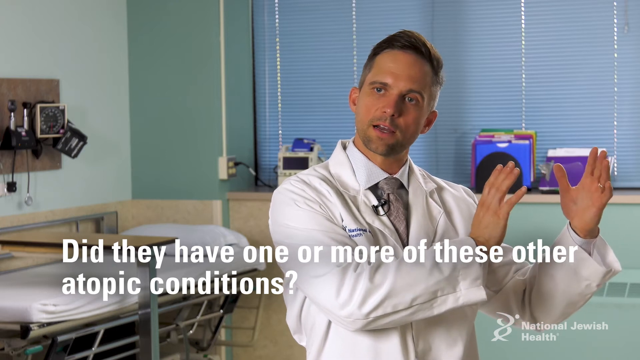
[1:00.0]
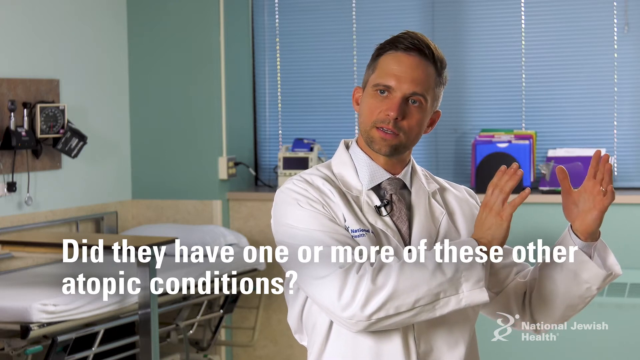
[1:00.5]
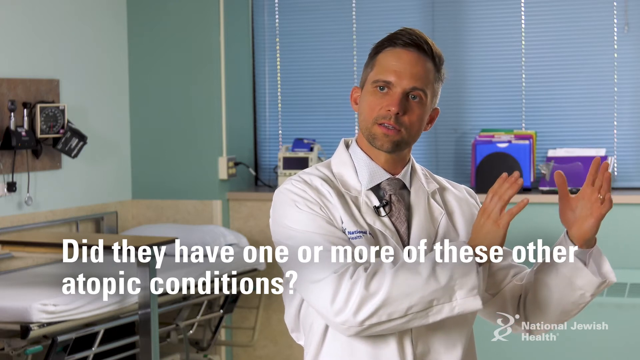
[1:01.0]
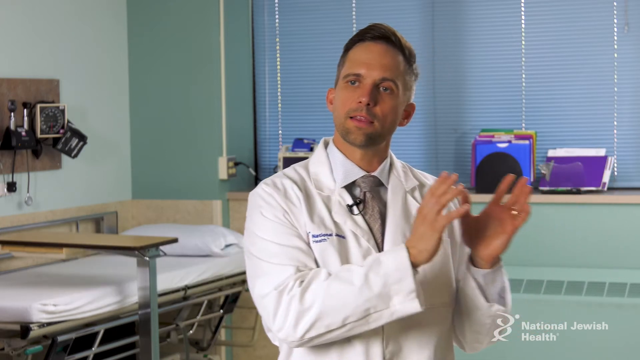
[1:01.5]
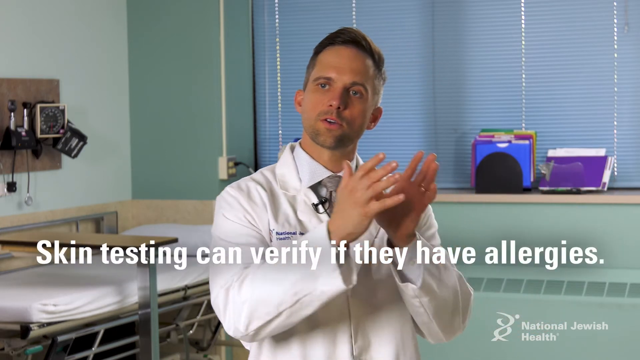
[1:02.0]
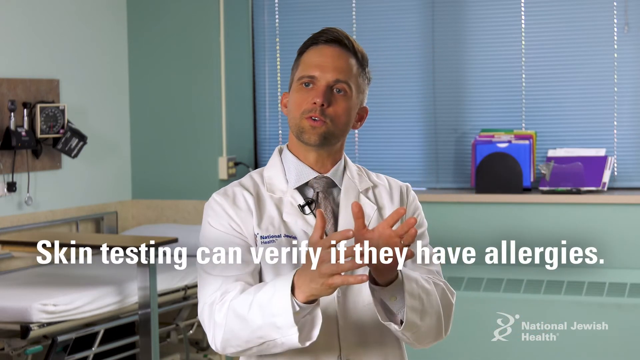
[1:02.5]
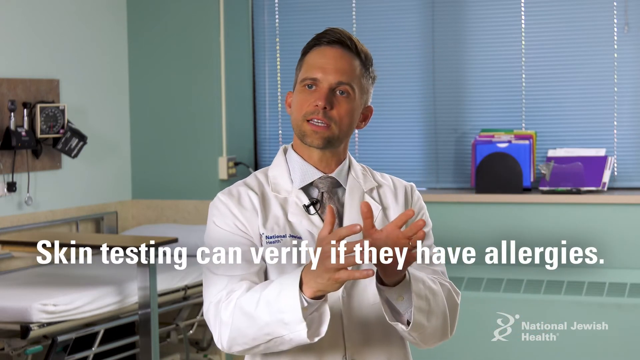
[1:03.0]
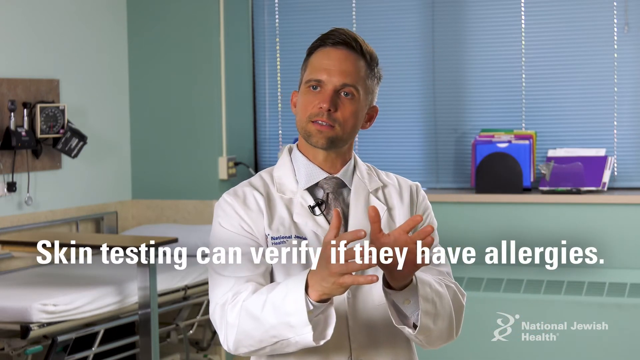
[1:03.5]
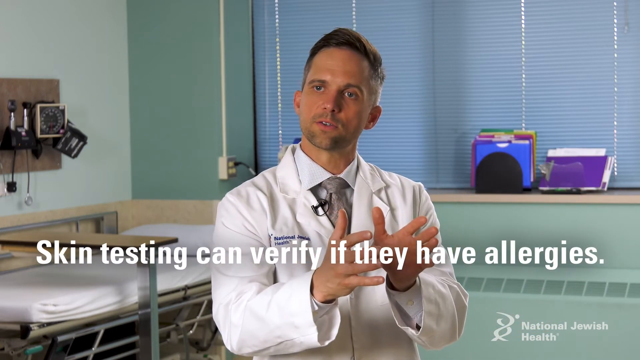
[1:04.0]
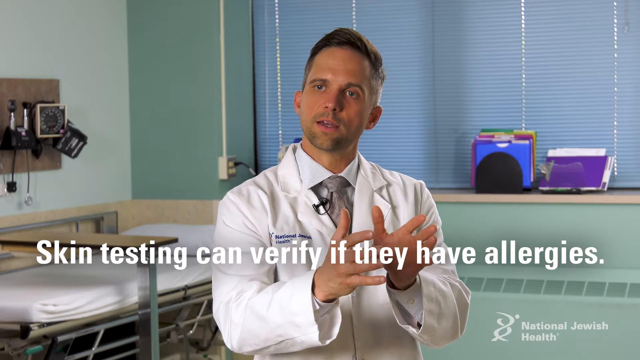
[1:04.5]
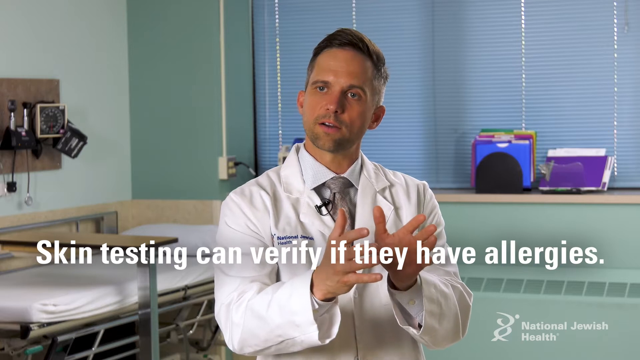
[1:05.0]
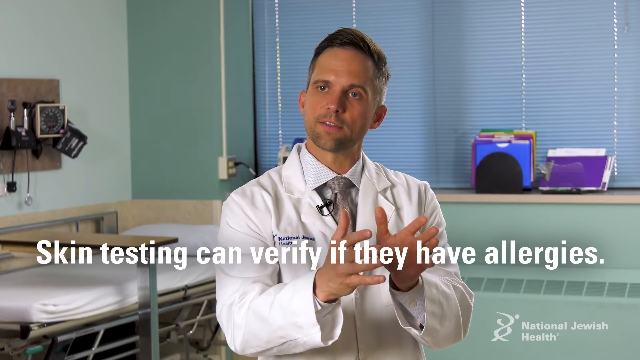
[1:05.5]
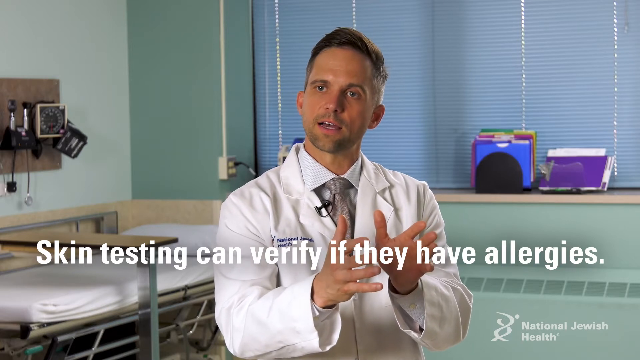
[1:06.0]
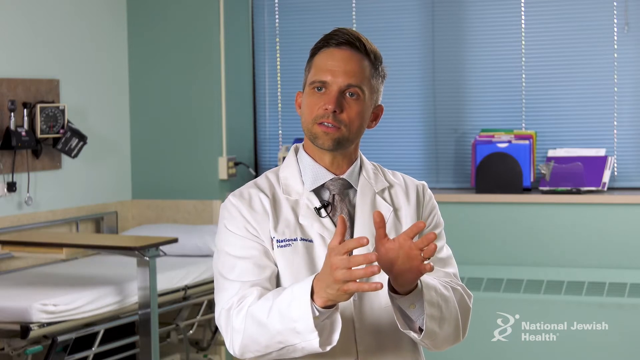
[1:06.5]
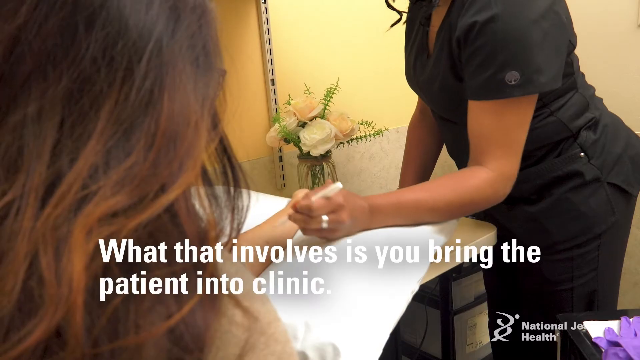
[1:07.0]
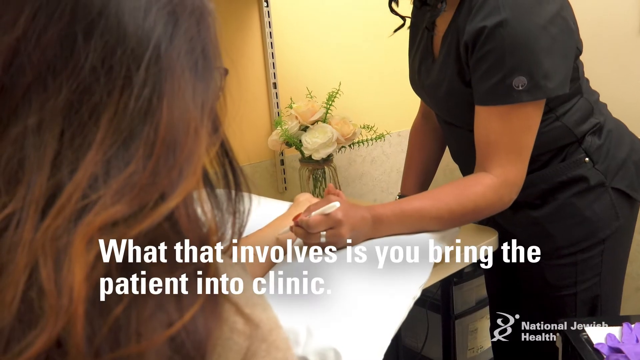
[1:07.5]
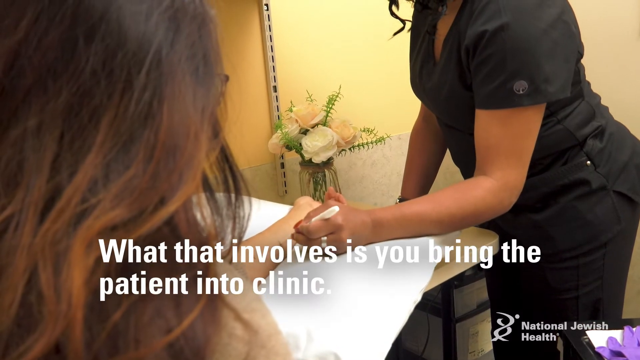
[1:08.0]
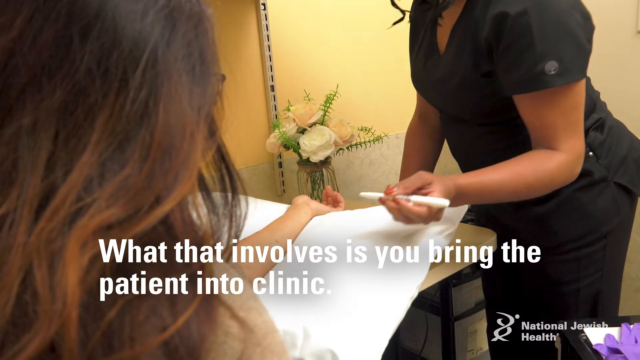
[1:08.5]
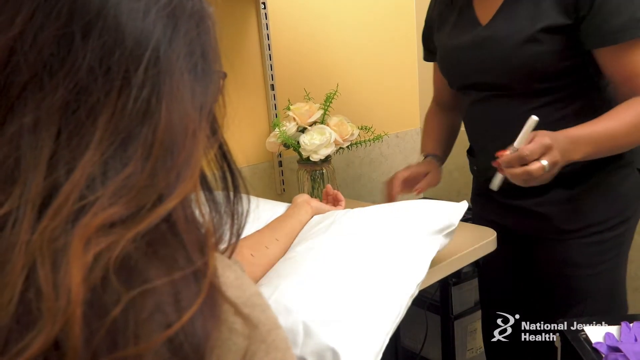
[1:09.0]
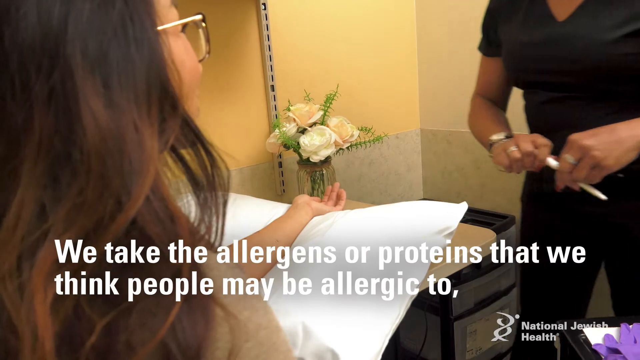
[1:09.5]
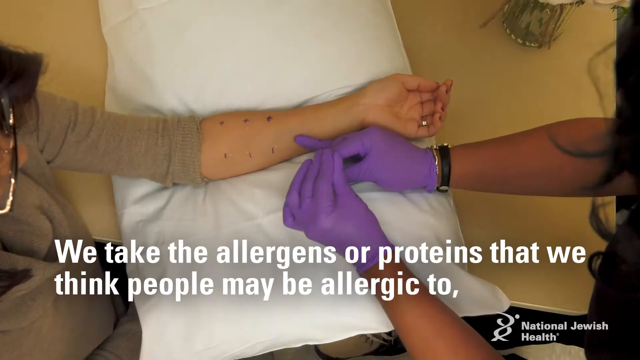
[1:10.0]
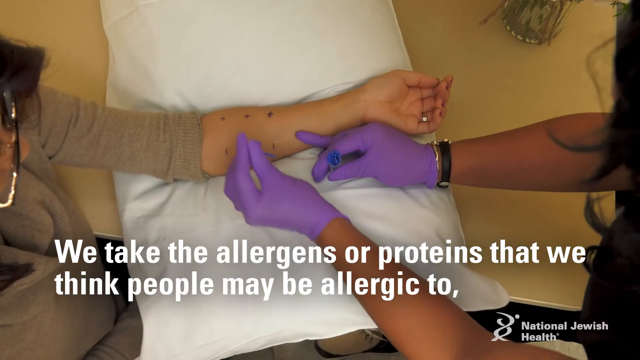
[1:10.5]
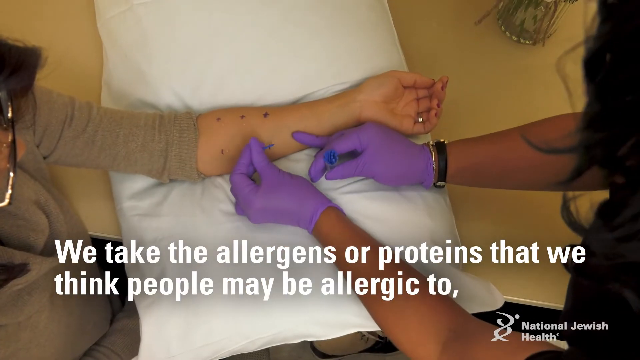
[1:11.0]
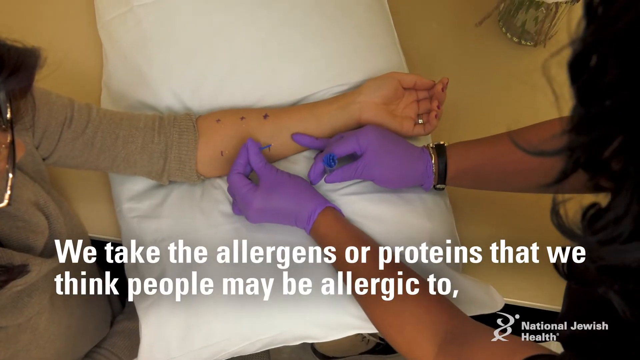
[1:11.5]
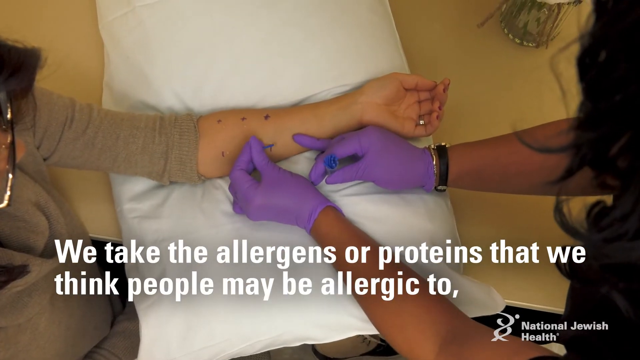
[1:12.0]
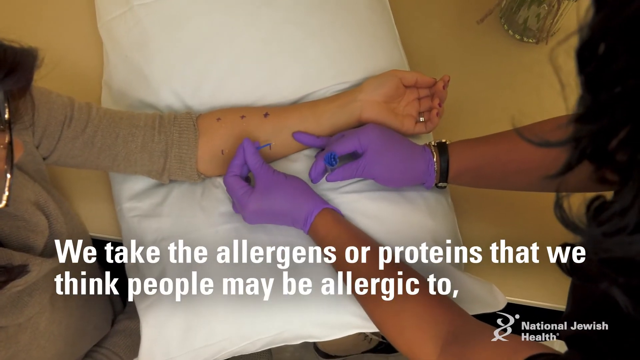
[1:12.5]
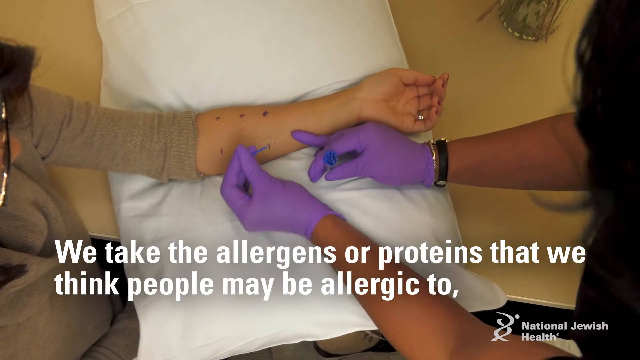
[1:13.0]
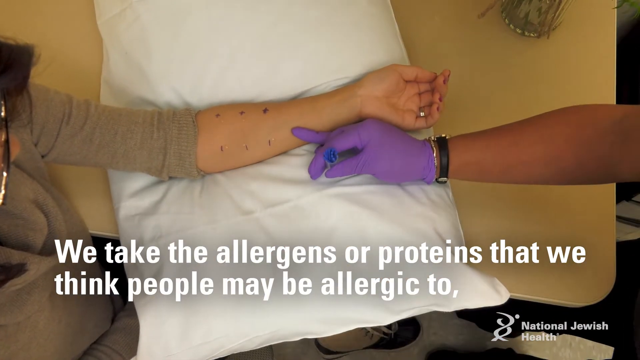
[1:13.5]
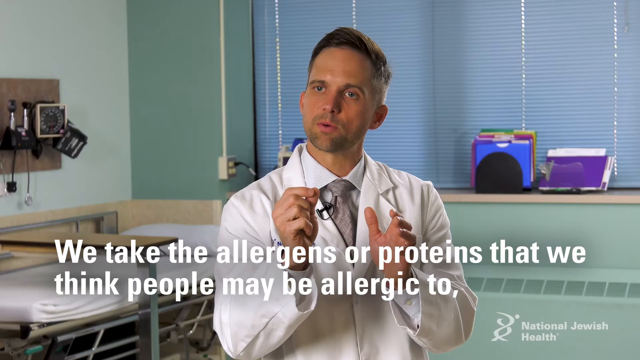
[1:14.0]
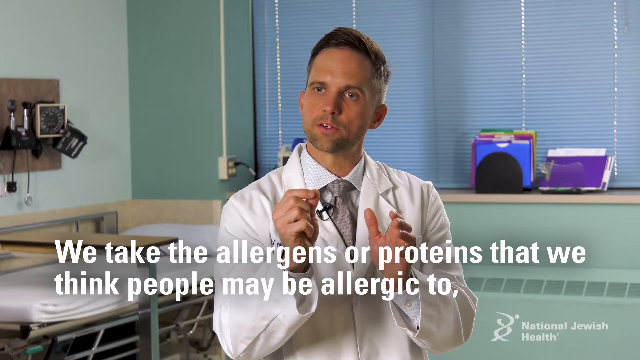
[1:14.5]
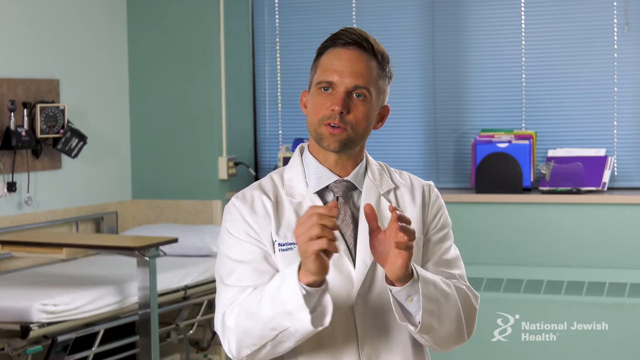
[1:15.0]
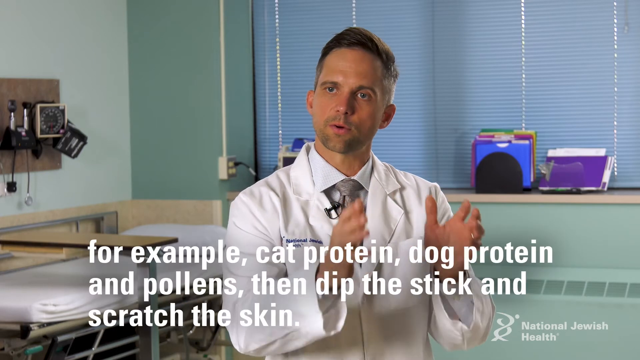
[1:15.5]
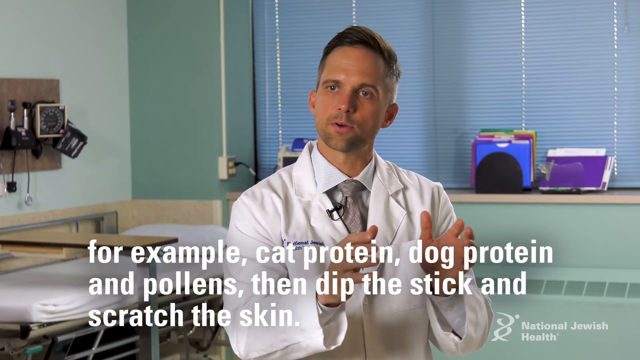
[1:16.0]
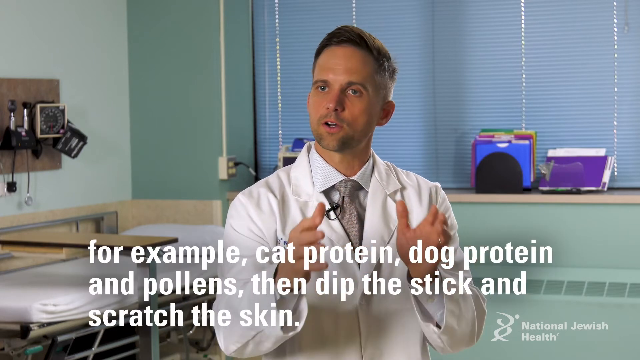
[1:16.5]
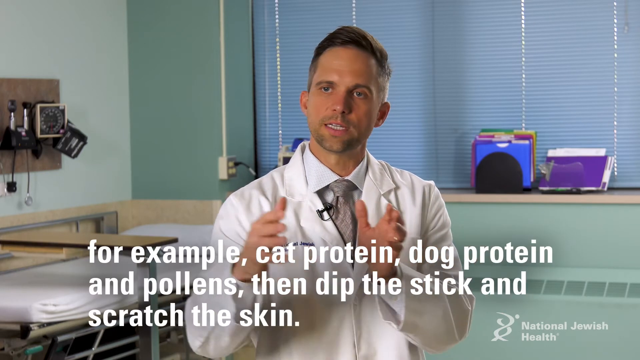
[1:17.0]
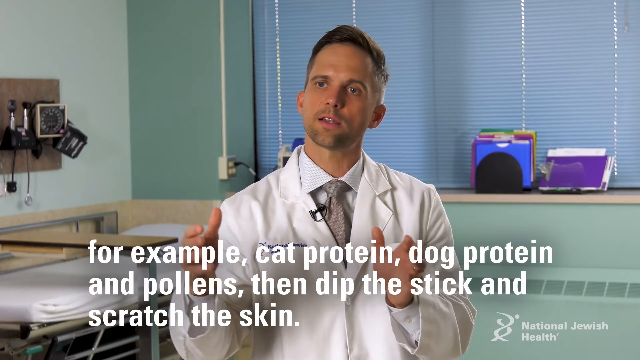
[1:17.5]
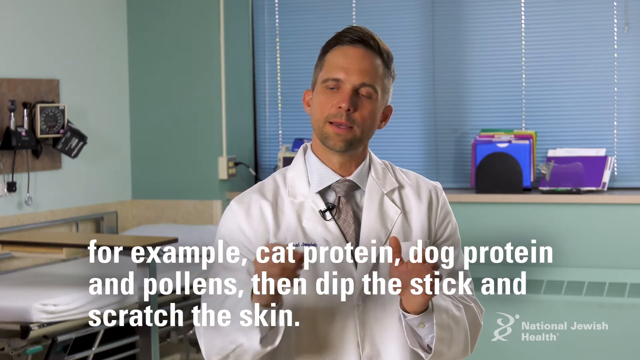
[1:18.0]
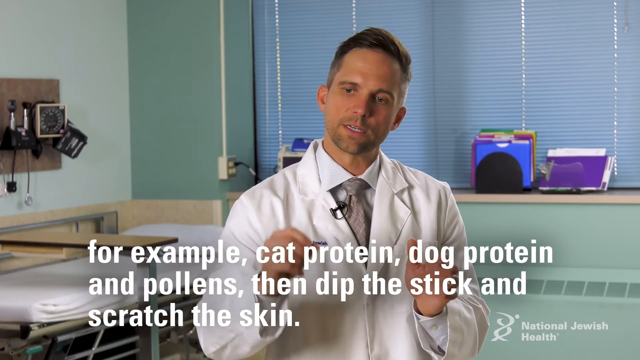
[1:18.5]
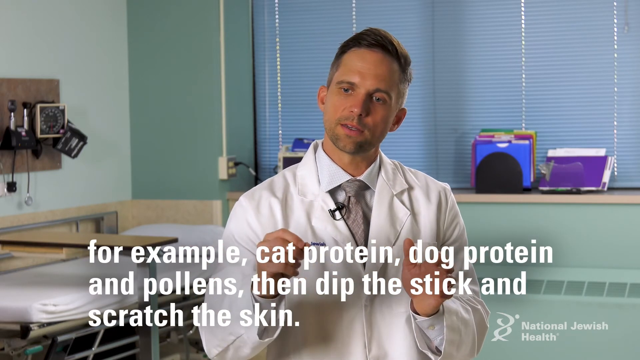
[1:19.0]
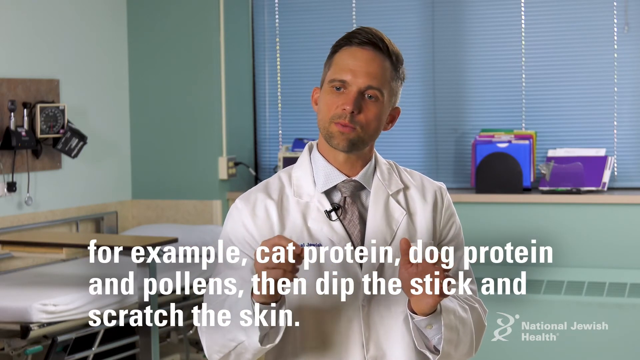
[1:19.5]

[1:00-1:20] The doctor is still talking, and text beneath him reads "did they have one or more of these other atopic conditions". Then the text reads "what that involves is you bring the patient into the clinic". A girl with long brown hair, the patient, sits with her arm on a table while a nurse in black scrubs stands and writes on her arm, marking where the different allergens go. A canning jar holds pink and white roses with some baby's breath. After the arm is marked with dots, different allergens or proteins are put on the dots.